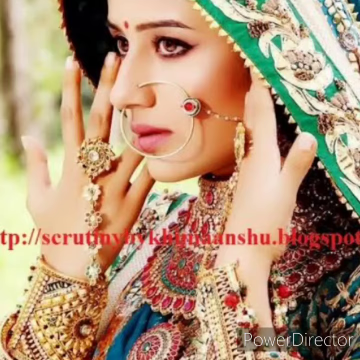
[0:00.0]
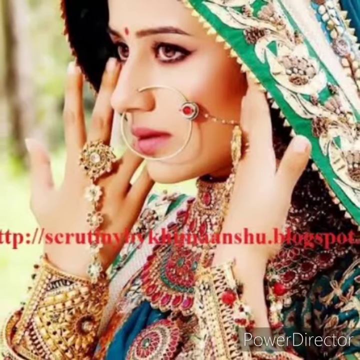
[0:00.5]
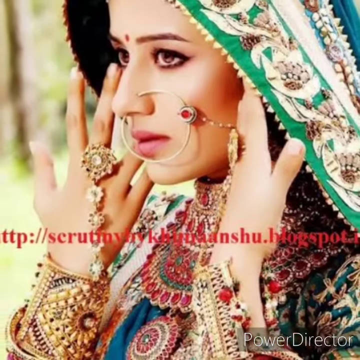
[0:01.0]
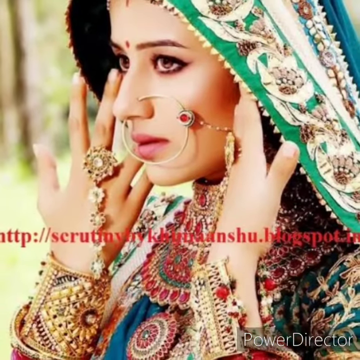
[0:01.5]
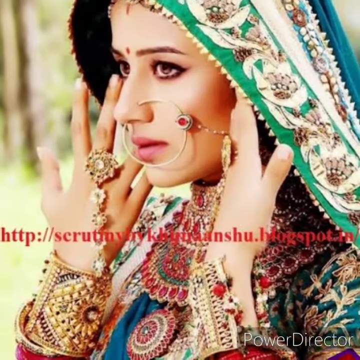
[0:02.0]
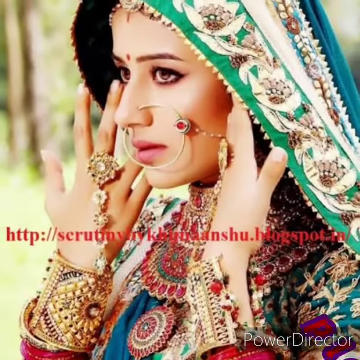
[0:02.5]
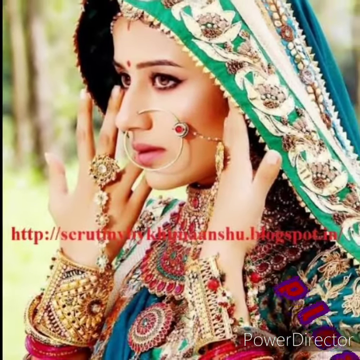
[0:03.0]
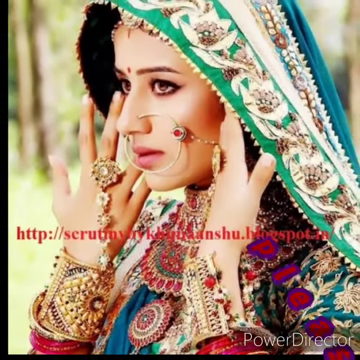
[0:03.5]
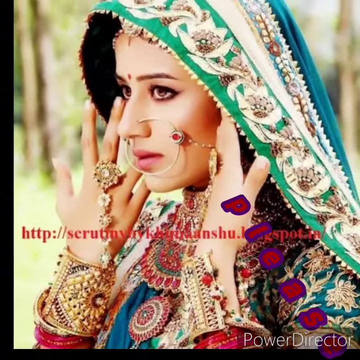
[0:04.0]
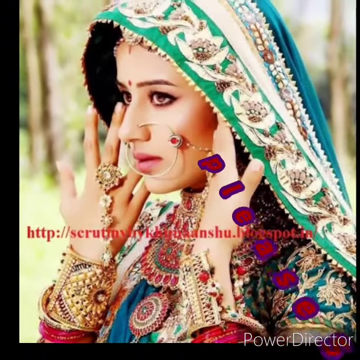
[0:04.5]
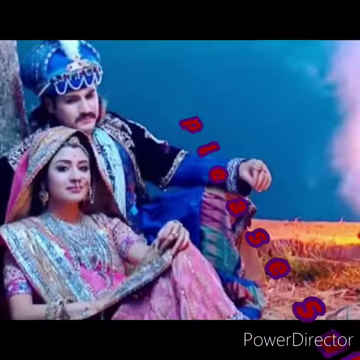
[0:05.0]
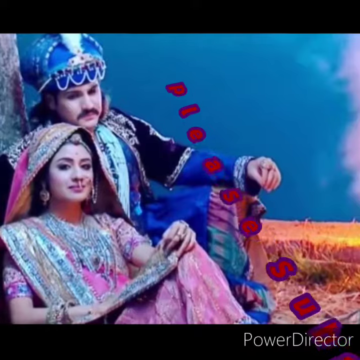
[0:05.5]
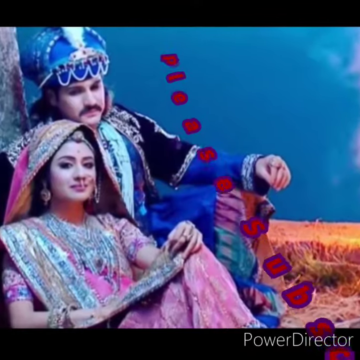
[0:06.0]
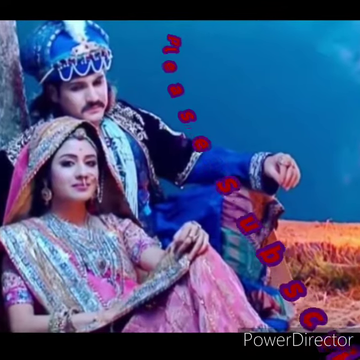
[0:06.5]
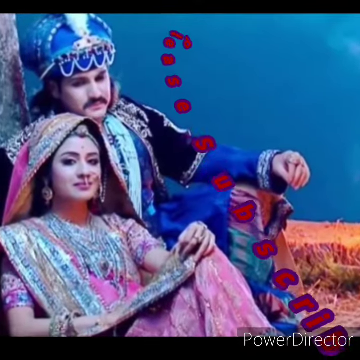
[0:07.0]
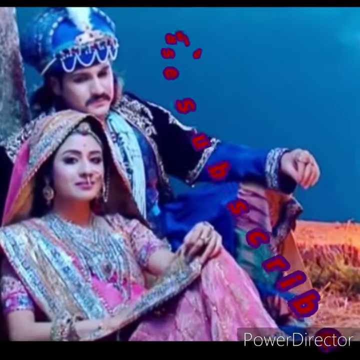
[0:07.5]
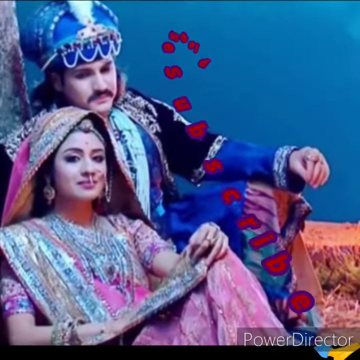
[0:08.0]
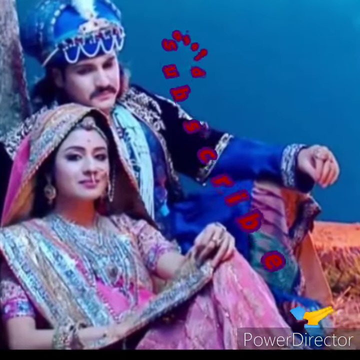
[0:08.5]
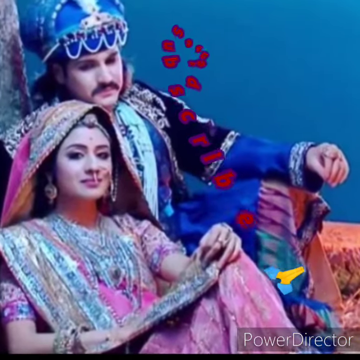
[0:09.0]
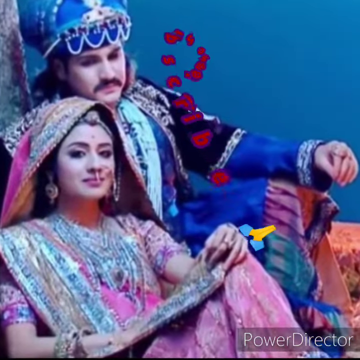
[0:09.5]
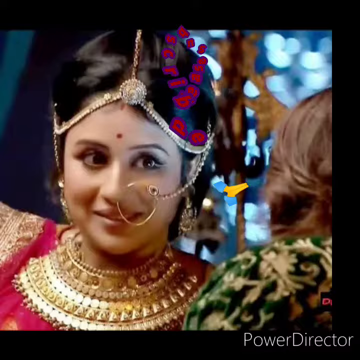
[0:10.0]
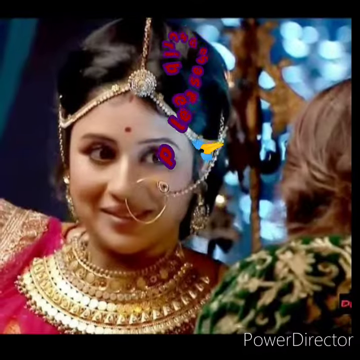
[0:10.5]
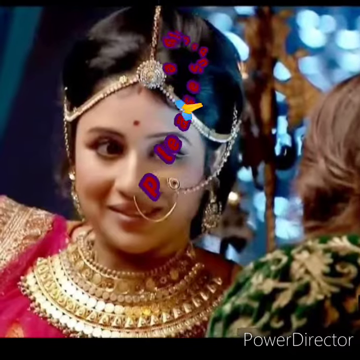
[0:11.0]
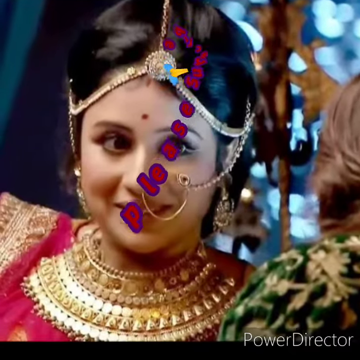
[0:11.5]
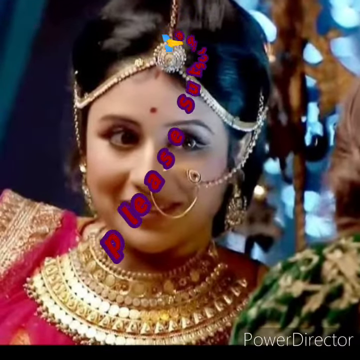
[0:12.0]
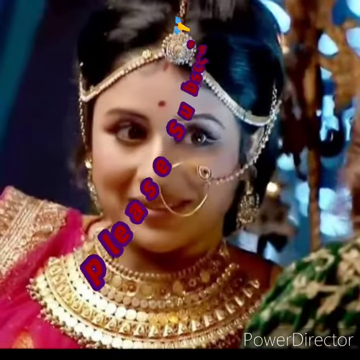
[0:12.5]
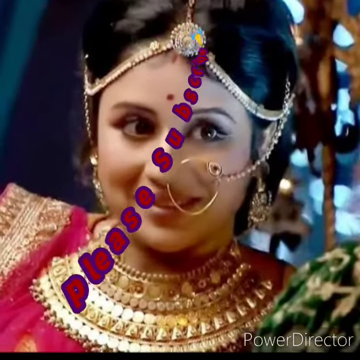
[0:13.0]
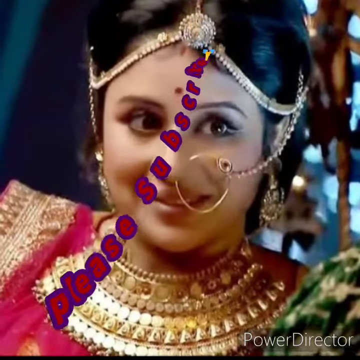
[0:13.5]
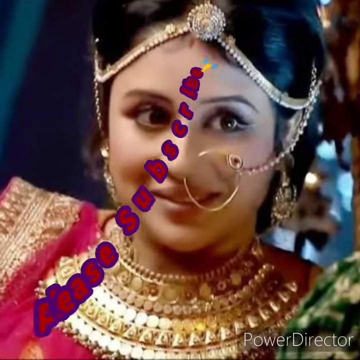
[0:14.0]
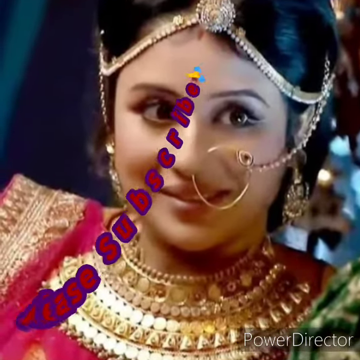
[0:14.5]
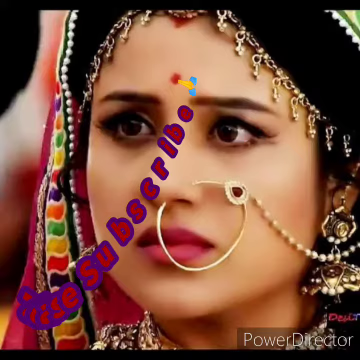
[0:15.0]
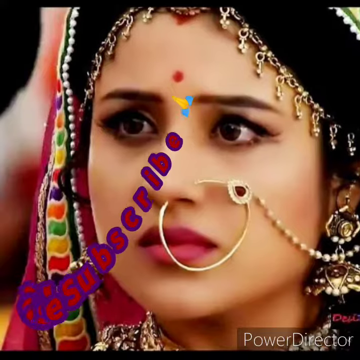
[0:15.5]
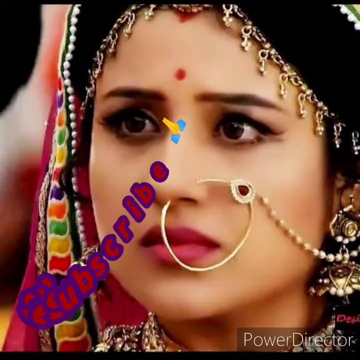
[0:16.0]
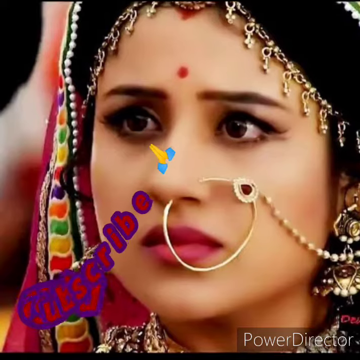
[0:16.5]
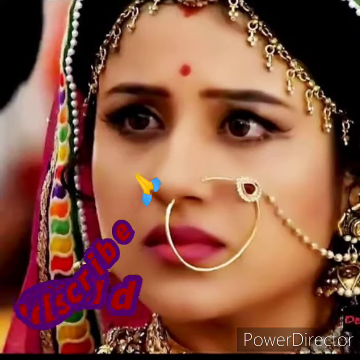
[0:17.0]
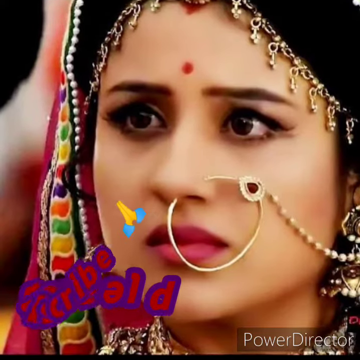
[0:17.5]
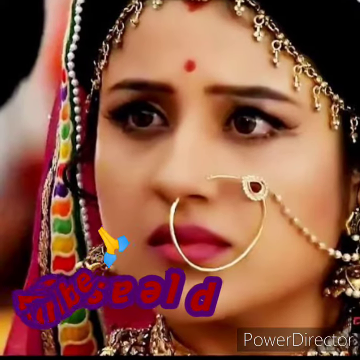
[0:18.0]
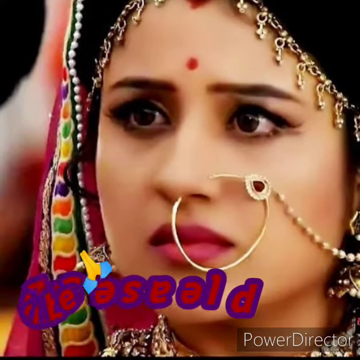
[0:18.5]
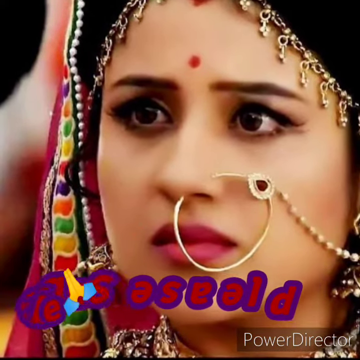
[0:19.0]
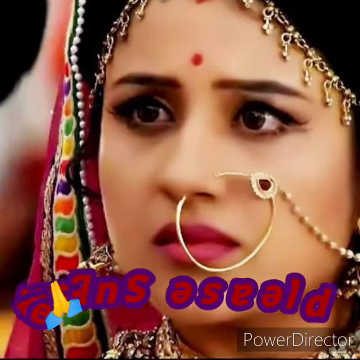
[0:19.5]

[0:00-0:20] An Indian woman has a red dot on her forehead and a nose piercing: a large gold hoop with what looks like a ruby jewel attached, and a chain that goes to her ear. A scarf-like cloth is draped over her head, and she holds it on her left and right sides with her hands up. On each hand, a long chain-like ring runs from her middle finger to her wrist, where it connects to a gold wrist bracelet, the same on both her left and right arms. She wears a jeweled neck necklace. Next, a gentleman in blue Indian attire wears a hat with some kind of jewels on it and a feather in the middle. He is sitting down next to a woman in pink Indian attire, who has a scarf-like cloth draped around her head, a nose piercing that connects to her ear, long earrings, and a pink skirt-like garment. There is some smoke at the side of them. Another woman has a gold head jewel on the red dot on her forehead and a nose piercing with a big hoop that connects to her ear.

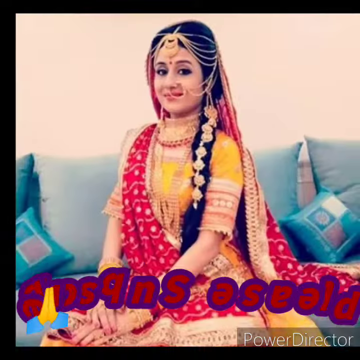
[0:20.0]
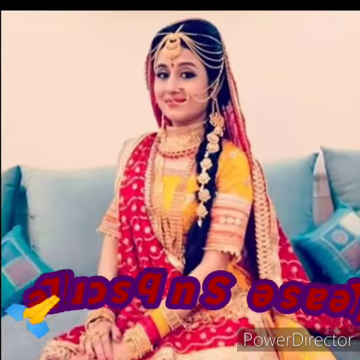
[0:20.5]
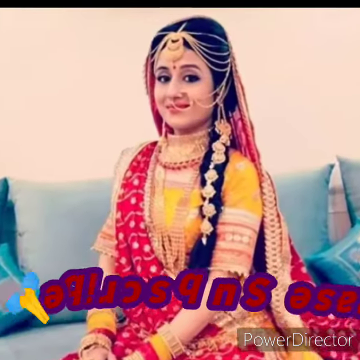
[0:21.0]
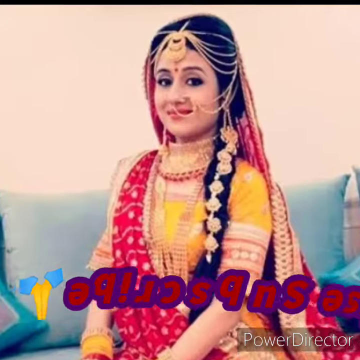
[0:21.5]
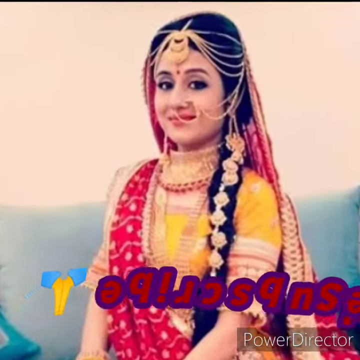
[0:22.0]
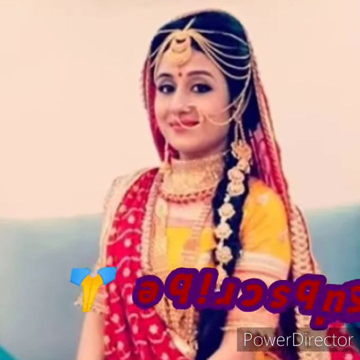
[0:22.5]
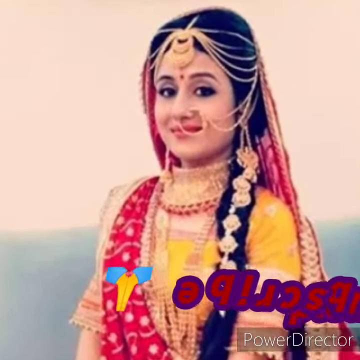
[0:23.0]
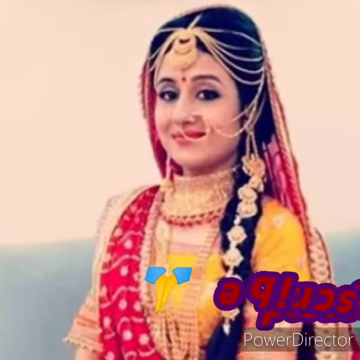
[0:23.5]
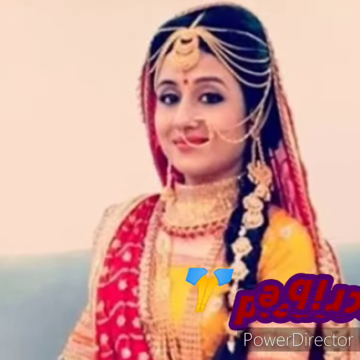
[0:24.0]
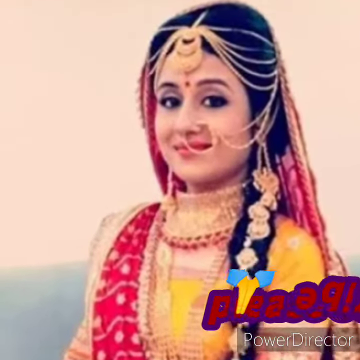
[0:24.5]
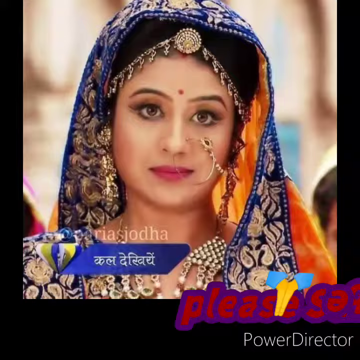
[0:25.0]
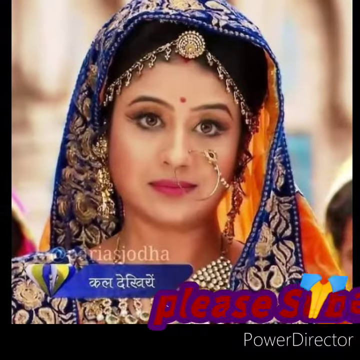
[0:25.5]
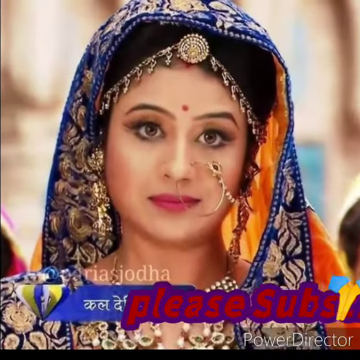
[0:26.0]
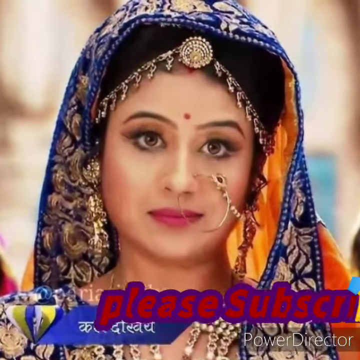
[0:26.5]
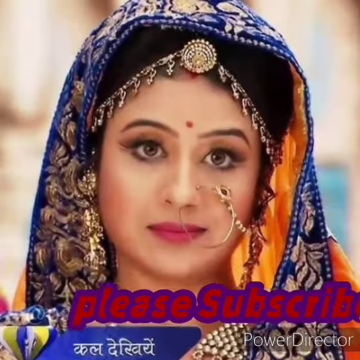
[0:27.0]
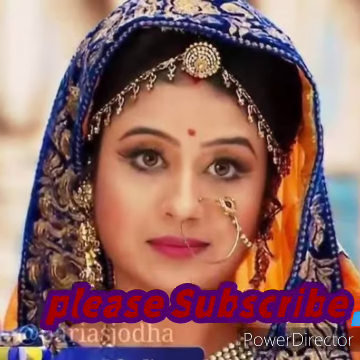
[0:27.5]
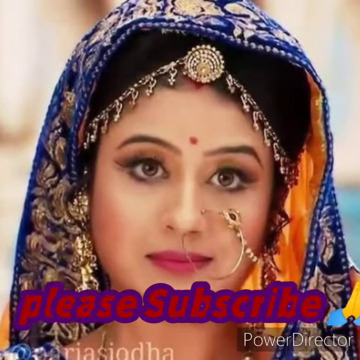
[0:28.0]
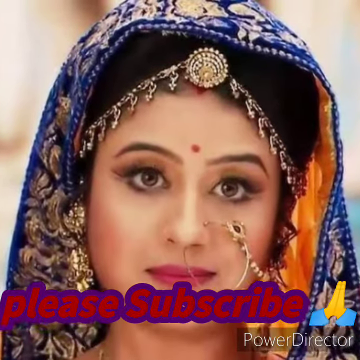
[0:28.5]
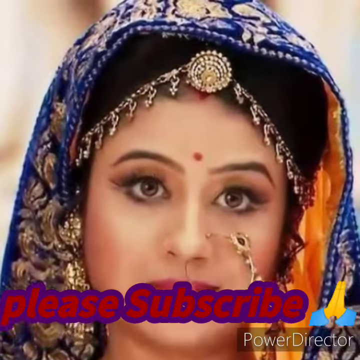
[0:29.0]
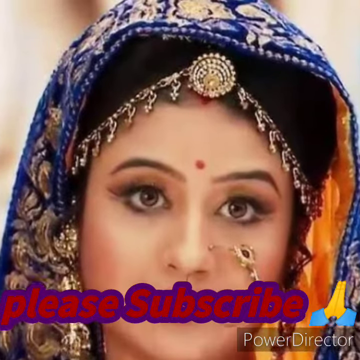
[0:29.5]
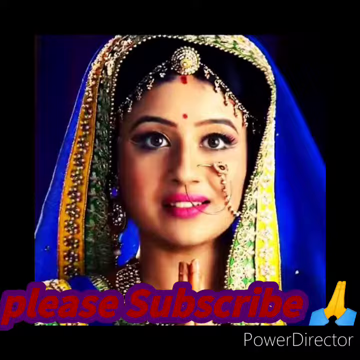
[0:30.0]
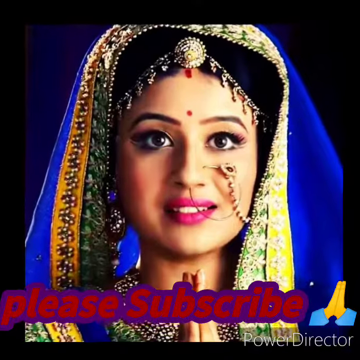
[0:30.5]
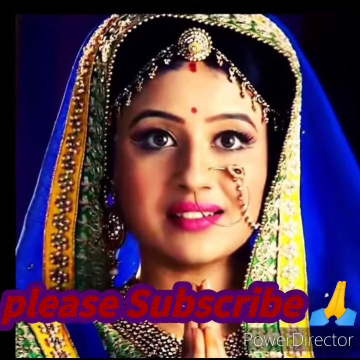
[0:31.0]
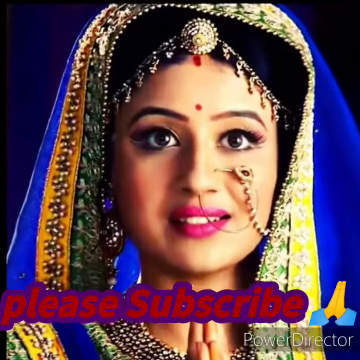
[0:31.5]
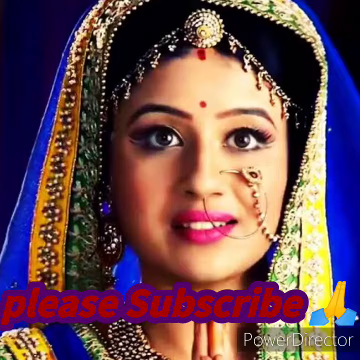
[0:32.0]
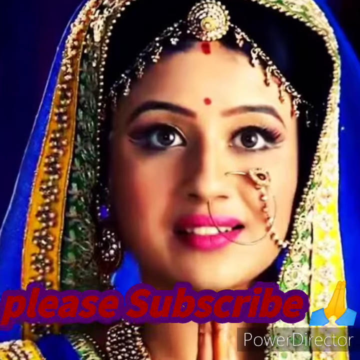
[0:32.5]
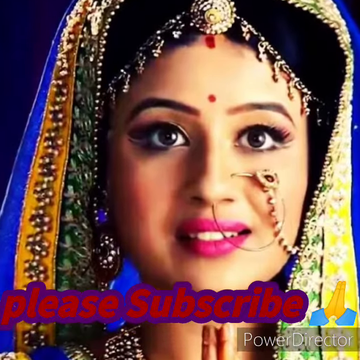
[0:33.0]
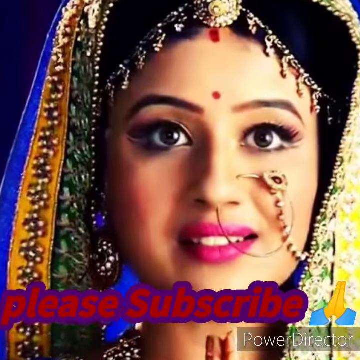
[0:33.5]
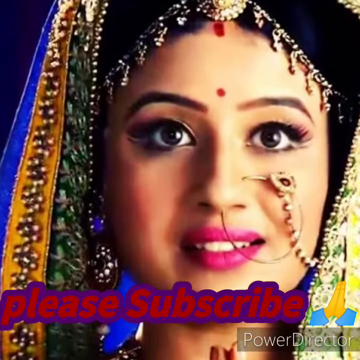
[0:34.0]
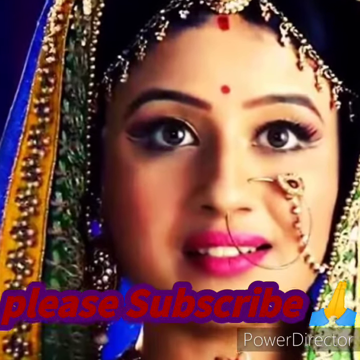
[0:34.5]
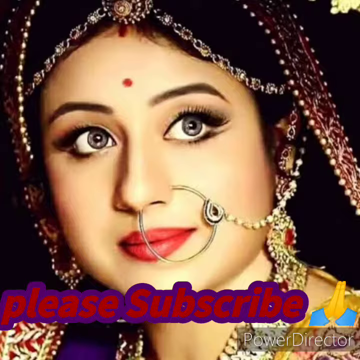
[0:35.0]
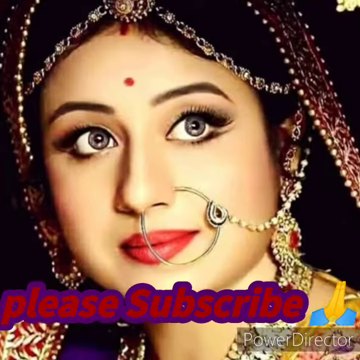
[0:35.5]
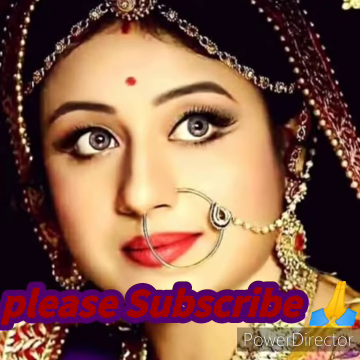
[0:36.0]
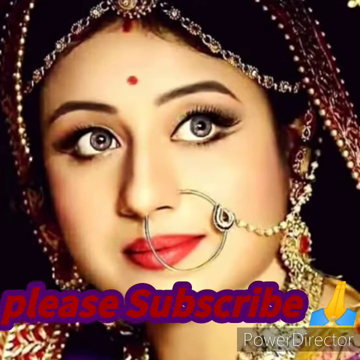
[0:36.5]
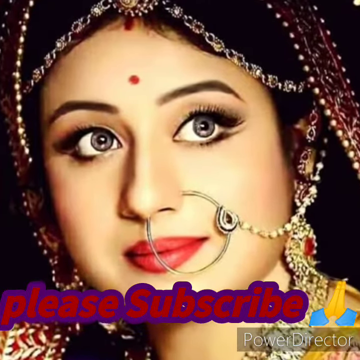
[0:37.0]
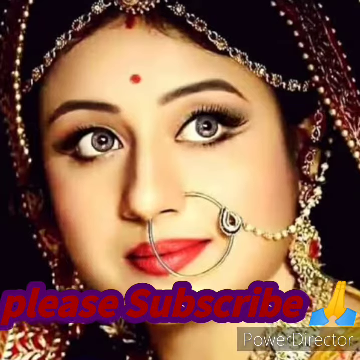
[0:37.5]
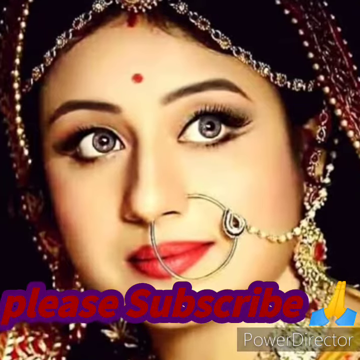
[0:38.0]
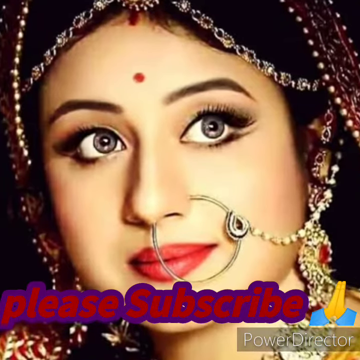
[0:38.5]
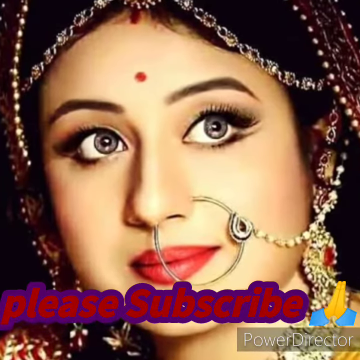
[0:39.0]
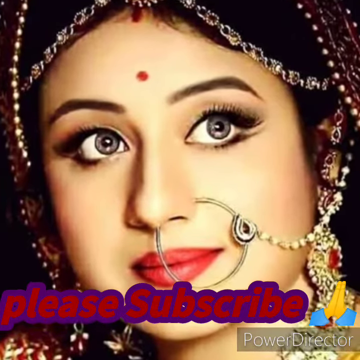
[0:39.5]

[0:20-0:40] An Indian woman in Indian attire is sitting kind of on the edge of a teal-colored couch, one hand folded over the other. She is smiling, her head tilted slightly. She wears gold head jewelry, a huge hoop in her nose attached to the headgear, a yellow short-sleeved Indian outfit, and a red scarf draped around her, and she has a red dot on her forehead. Another woman has the same nose piercing, a blue and gold scarf draped around her head, a red dot in the middle of her forehead, and pink lipstick; she is smiling slightly. Another woman wears blue headgear or scarf and has the same nose piercing, the red dot, and pink lipstick; she looks straight ahead. One more woman has gray eyes, red lipstick, a huge gold hoop in her nose attached to her head jewelry, and a red dot in the middle of her forehead. She faces forward but looks to the left, smiling slightly.